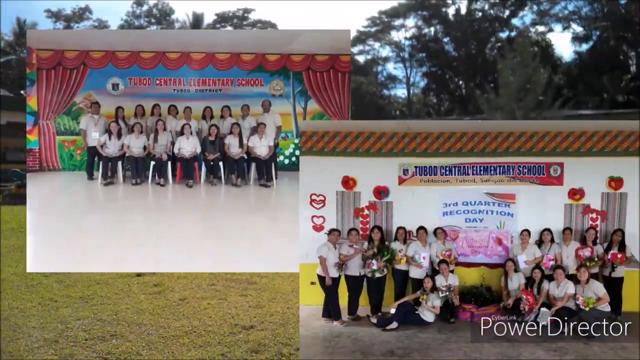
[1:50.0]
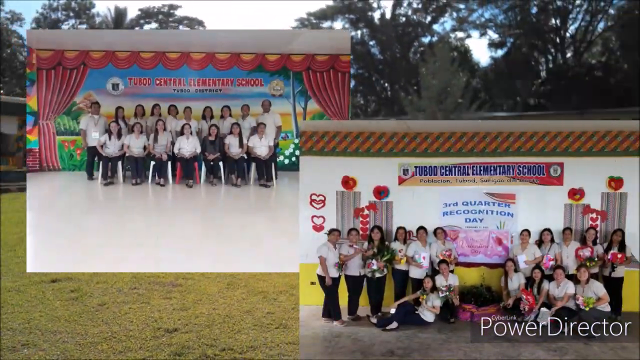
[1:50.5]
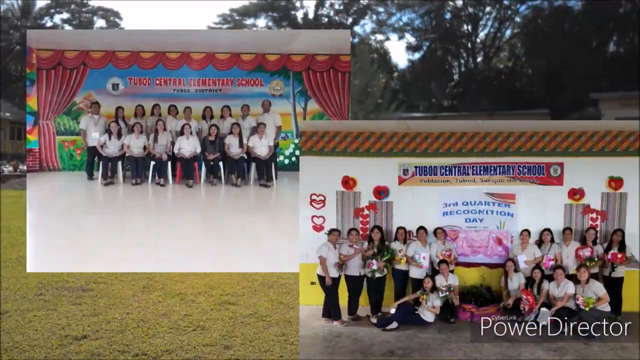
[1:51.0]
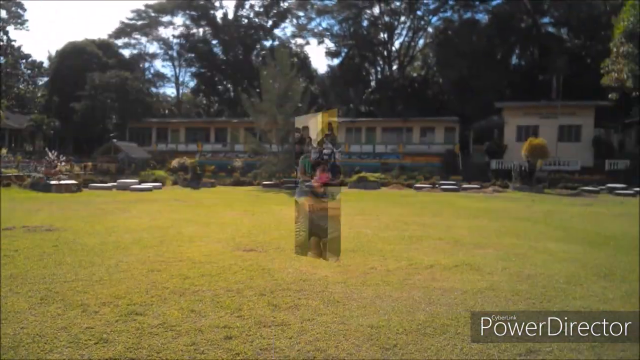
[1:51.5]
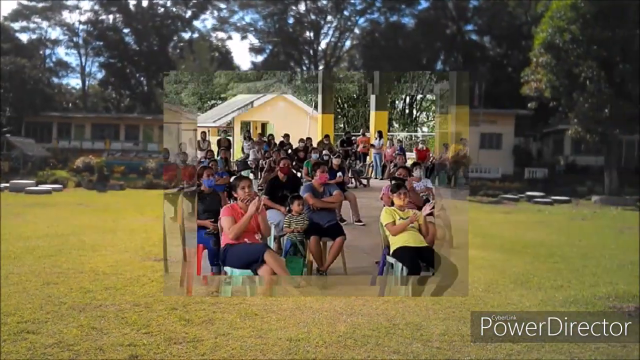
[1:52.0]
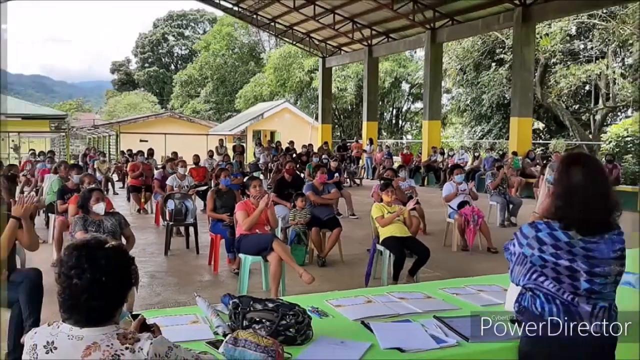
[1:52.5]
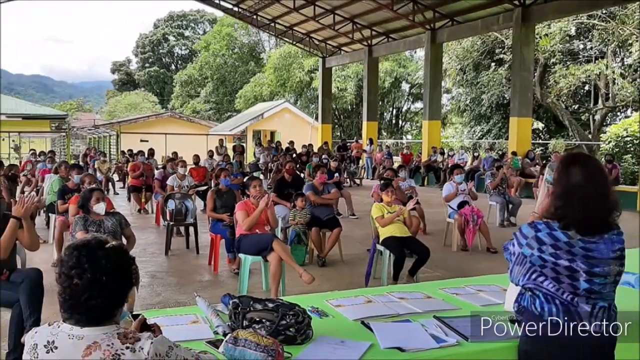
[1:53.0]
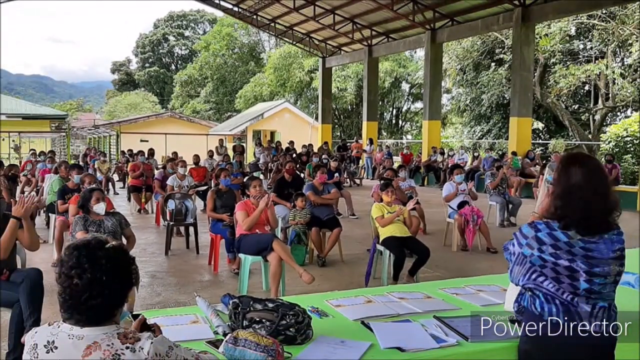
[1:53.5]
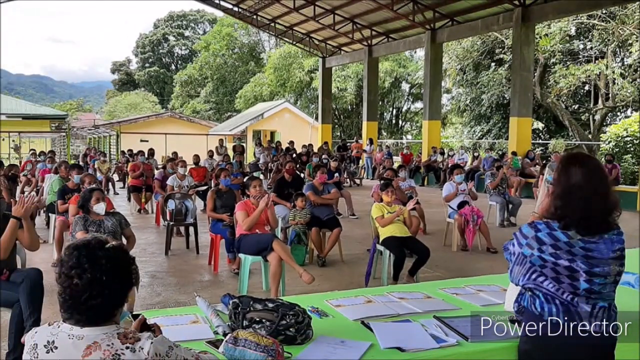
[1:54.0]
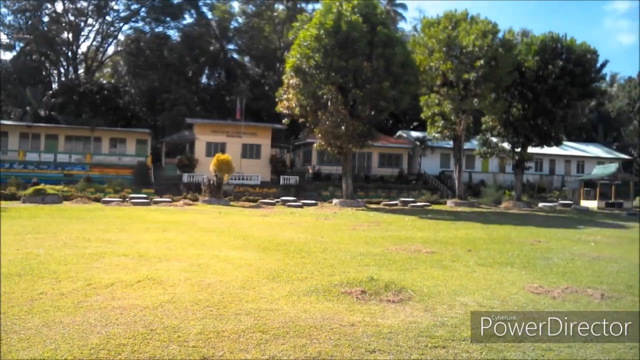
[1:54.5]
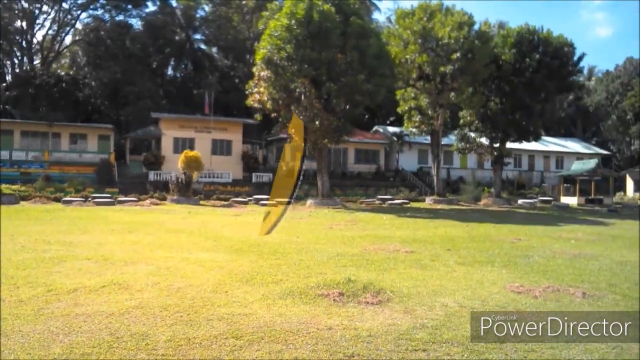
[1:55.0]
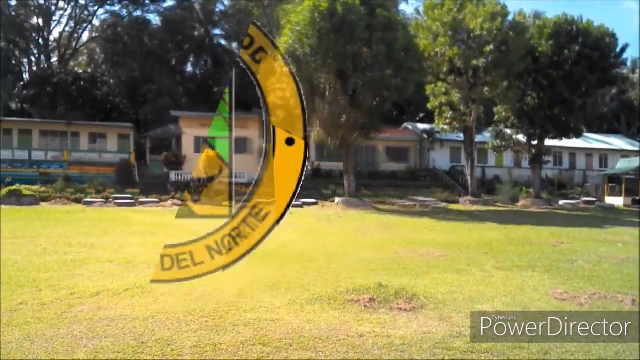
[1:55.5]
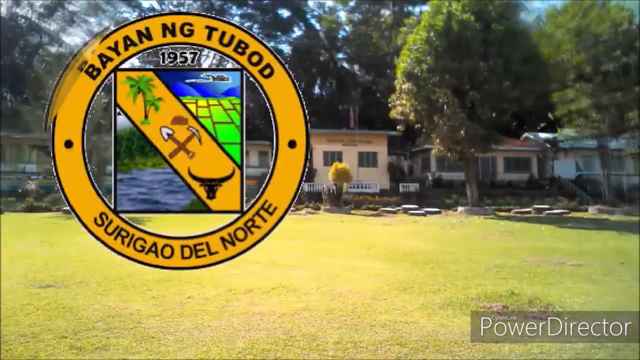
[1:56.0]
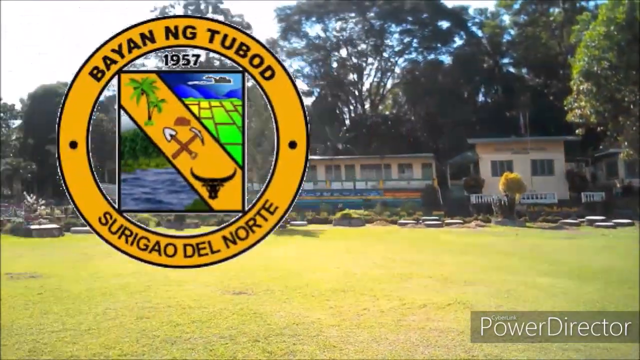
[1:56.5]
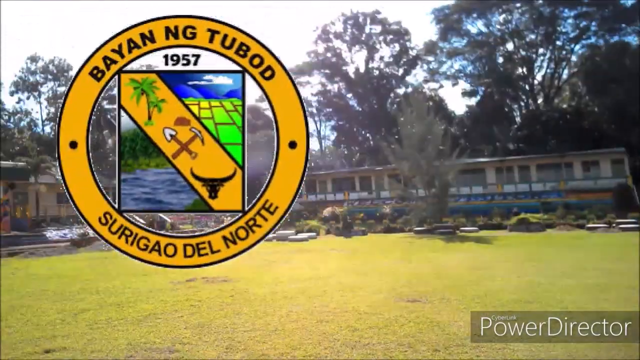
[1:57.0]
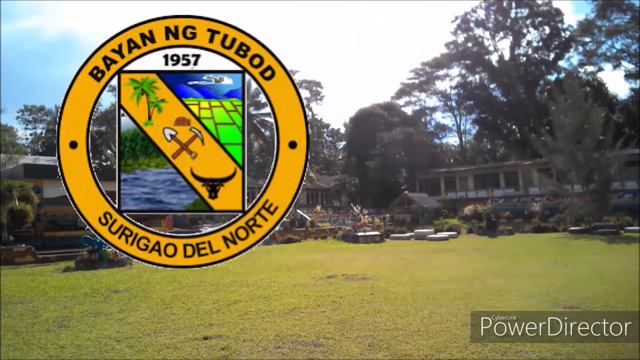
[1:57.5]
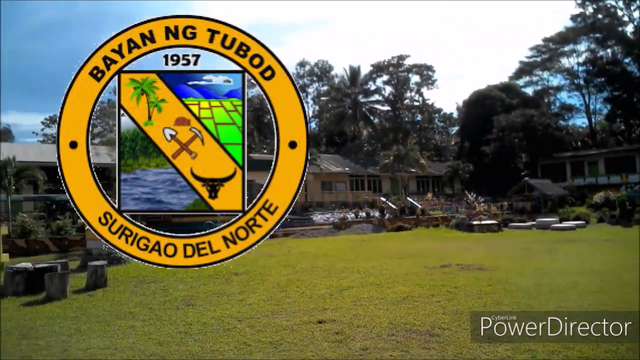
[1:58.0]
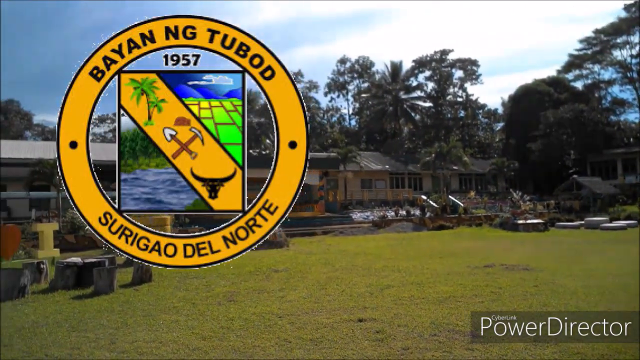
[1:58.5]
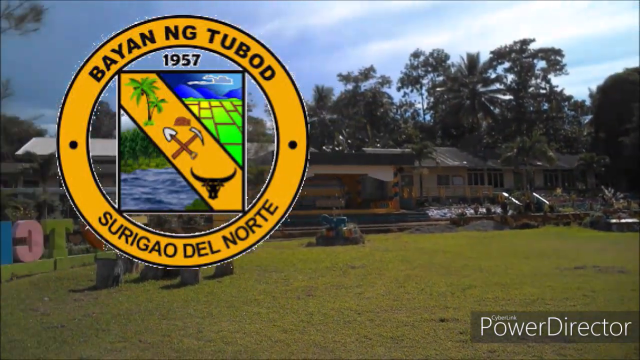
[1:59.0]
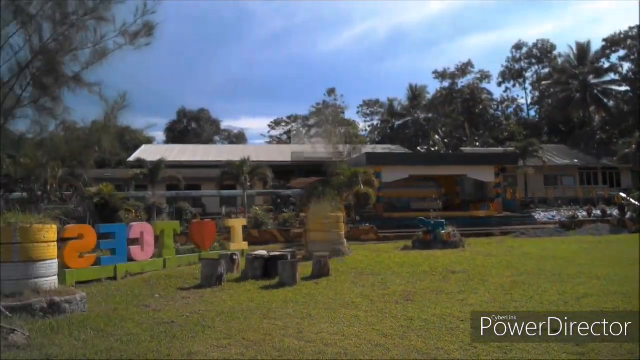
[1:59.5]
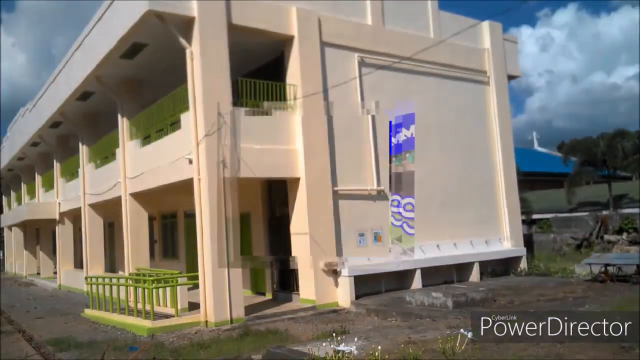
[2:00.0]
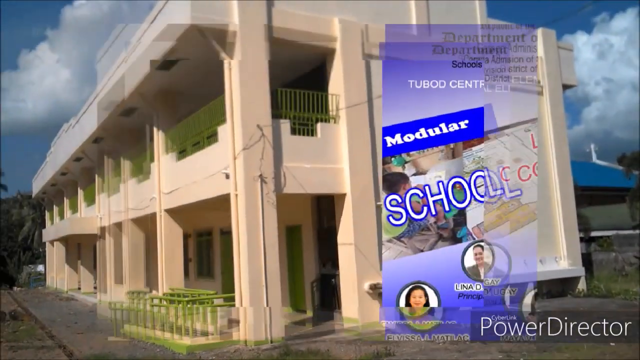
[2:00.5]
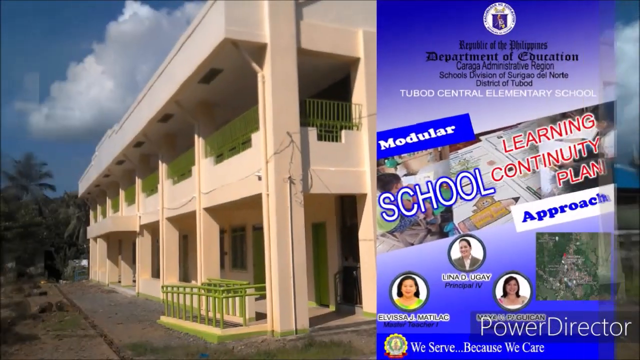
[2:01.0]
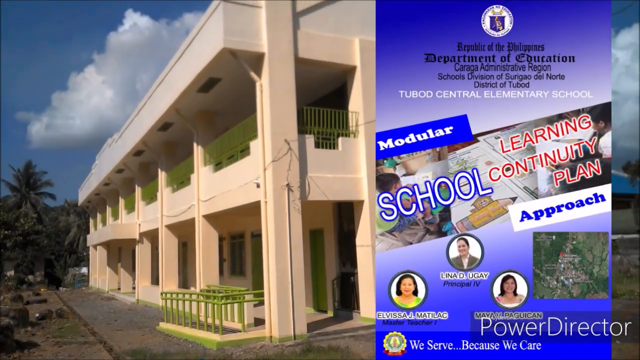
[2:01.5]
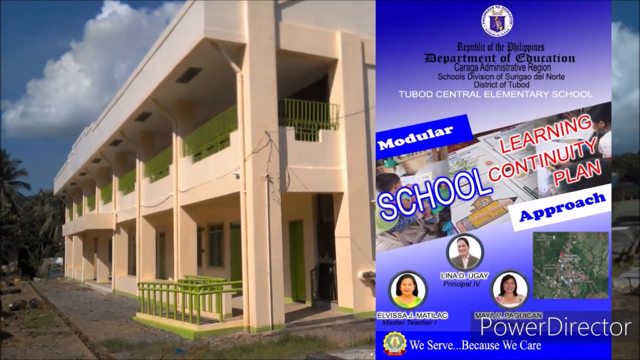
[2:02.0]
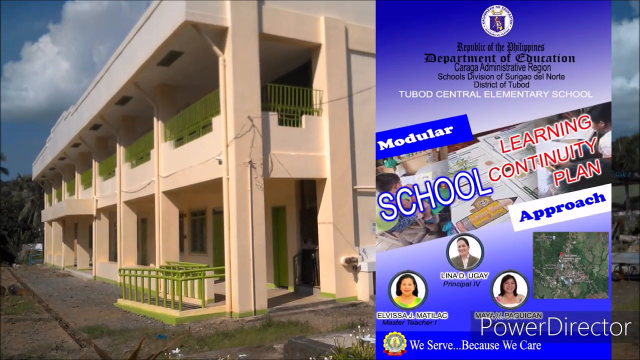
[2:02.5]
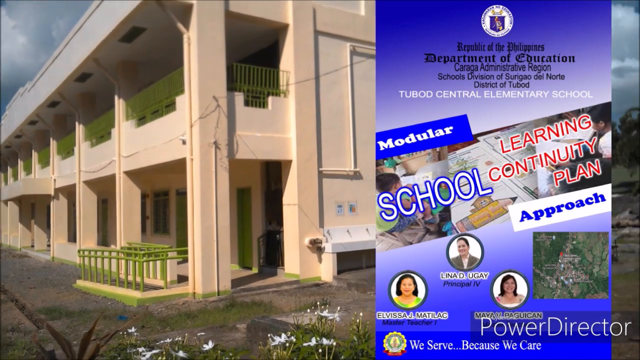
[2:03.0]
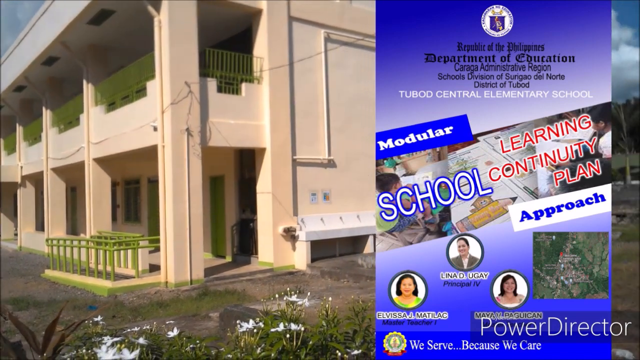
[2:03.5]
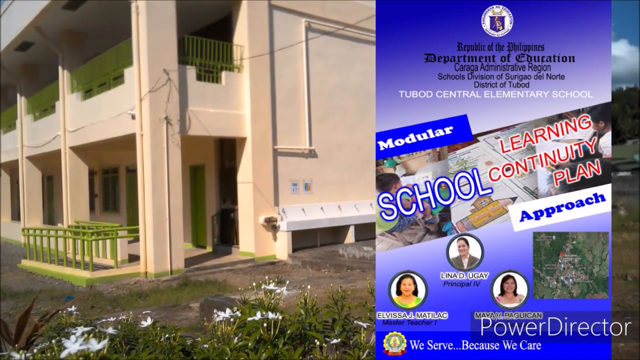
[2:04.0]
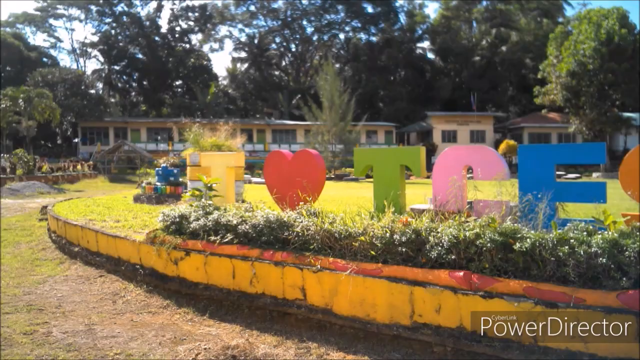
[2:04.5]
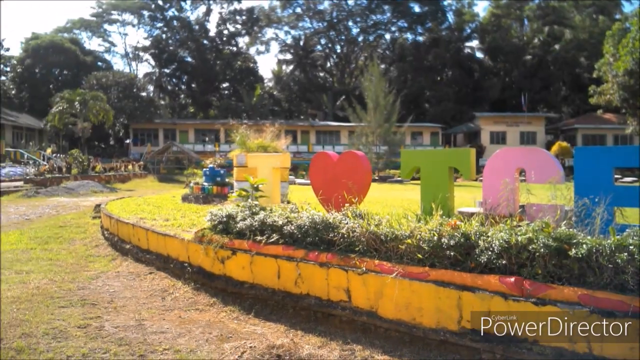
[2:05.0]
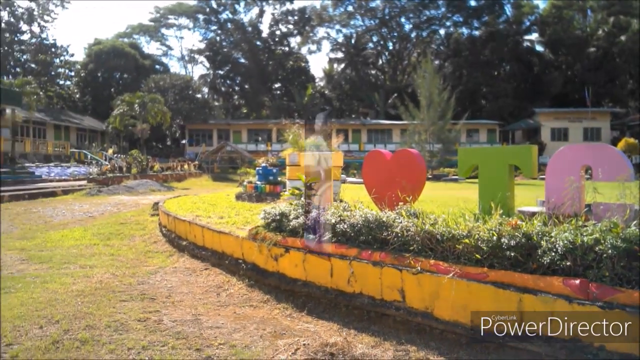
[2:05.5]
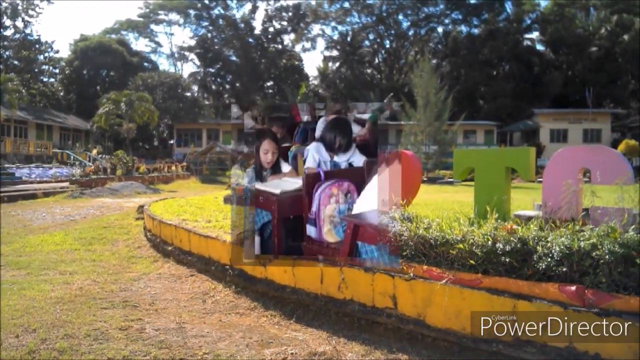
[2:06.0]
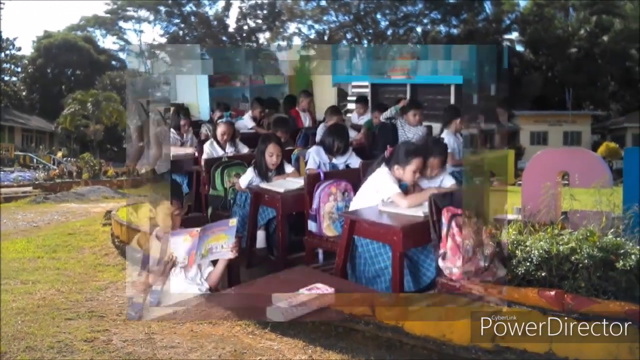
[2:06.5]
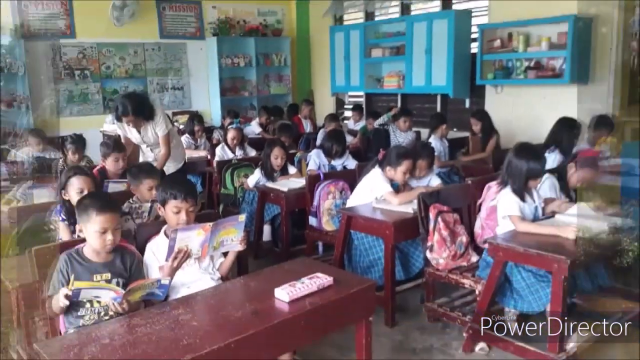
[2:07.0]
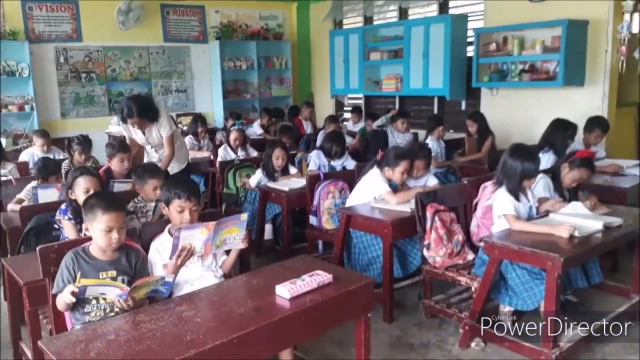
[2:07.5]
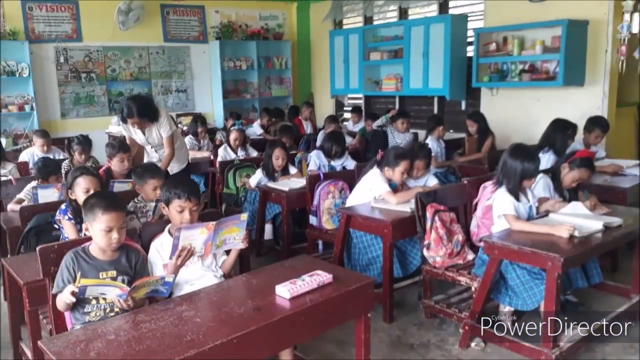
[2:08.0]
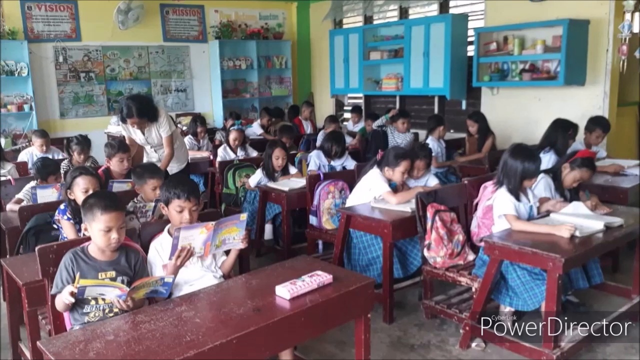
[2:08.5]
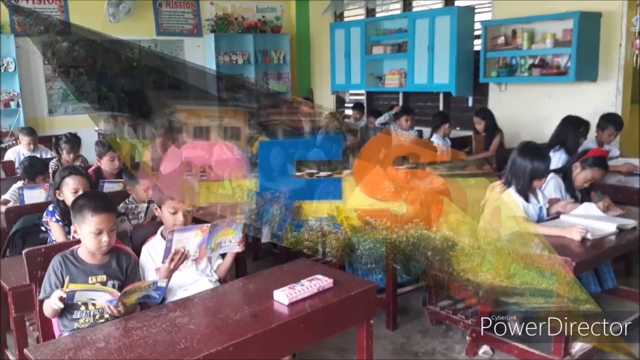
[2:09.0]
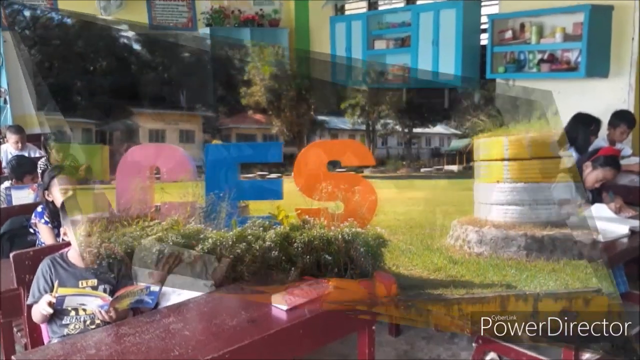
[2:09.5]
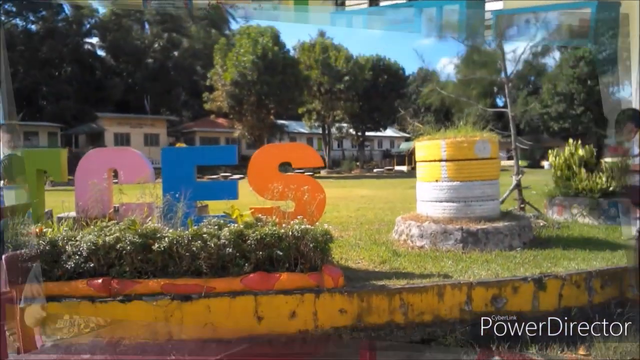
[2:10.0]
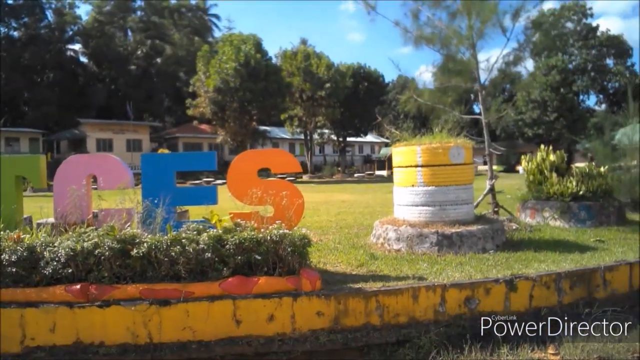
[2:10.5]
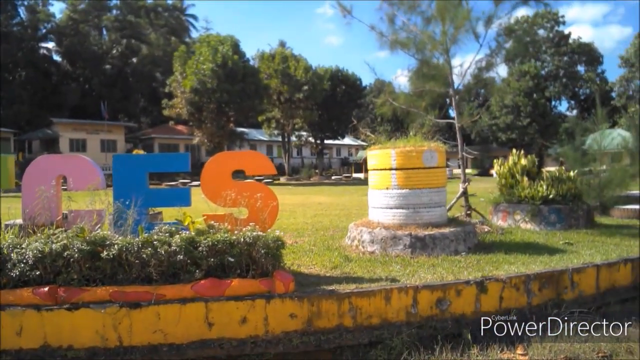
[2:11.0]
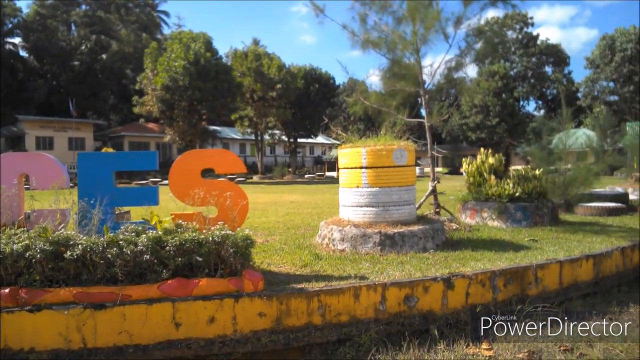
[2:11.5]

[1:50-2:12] The two photos of the school employees stay on screen for a while before the view switches to the parent orientation. There are quite a few parents, socially distanced, about half of them wearing masks. The view is from behind the people, up at the front of the room, and there are tables with packets of information. The school buildings are shown again, and a circle with orange coloring pops up on the screen reading "Bayan N.G. Tabad", with what looks like maybe some symbols representing the school and the date 1957. The camera pans around the outside of the school and then shows one of the buildings from the outside, which has balconies. A little brochure pops up reading "Modular School Learning Continuity Plan Approach", with three educators shown at the bottom. Then there is a picture of a classroom with students sitting at two-person desks working diligently while a teacher leans over one of the desks, followed by another view of the outside of the school.